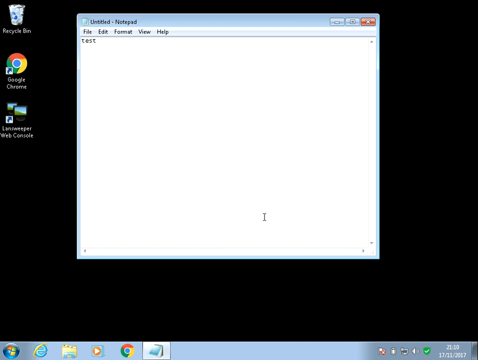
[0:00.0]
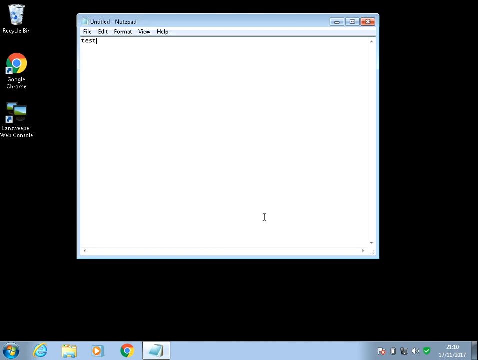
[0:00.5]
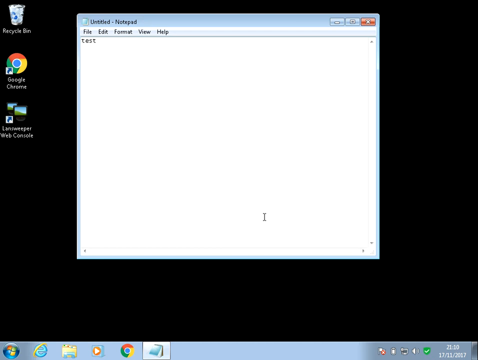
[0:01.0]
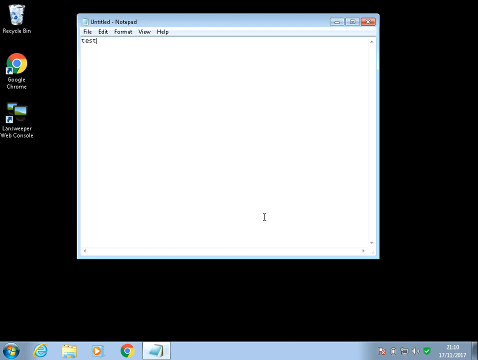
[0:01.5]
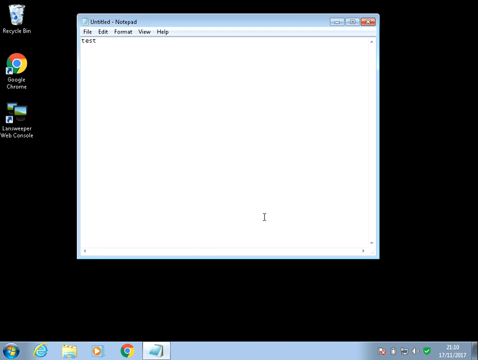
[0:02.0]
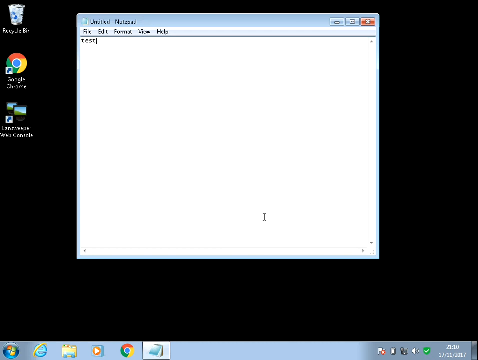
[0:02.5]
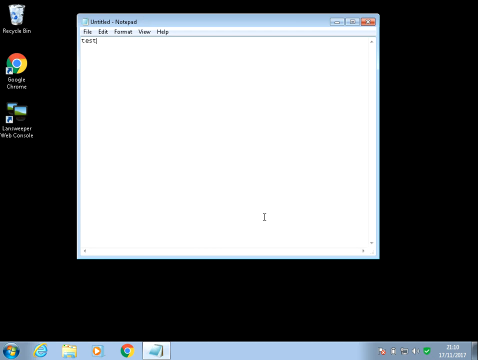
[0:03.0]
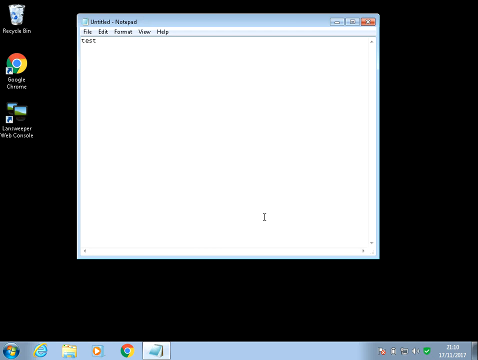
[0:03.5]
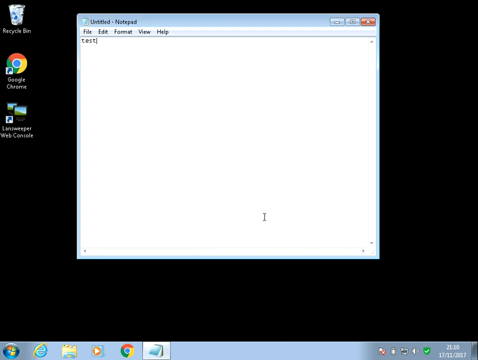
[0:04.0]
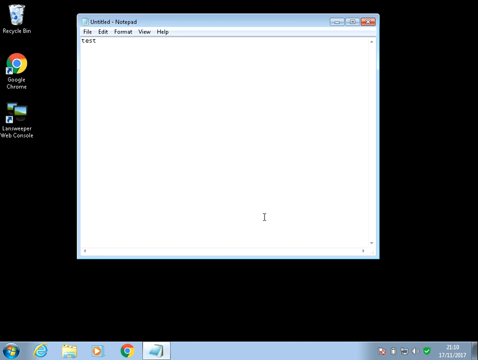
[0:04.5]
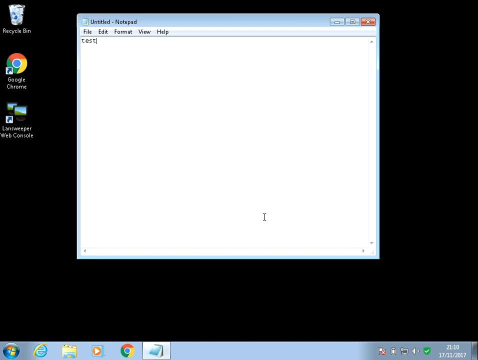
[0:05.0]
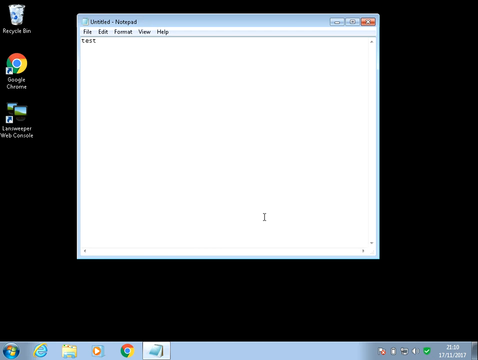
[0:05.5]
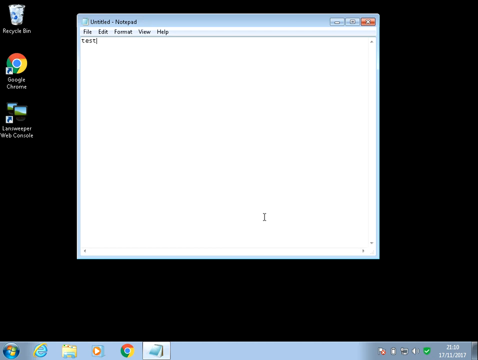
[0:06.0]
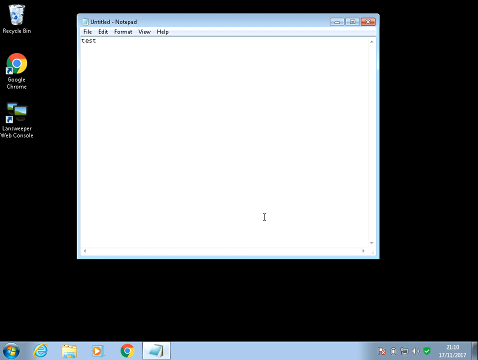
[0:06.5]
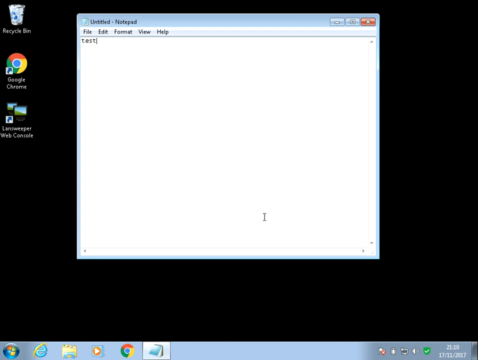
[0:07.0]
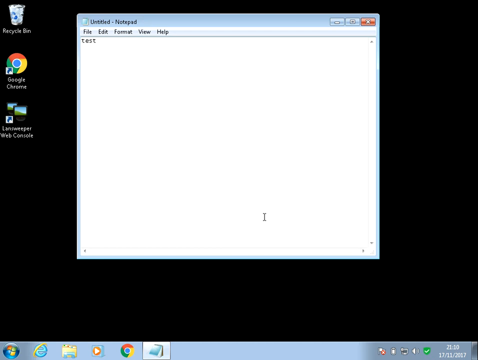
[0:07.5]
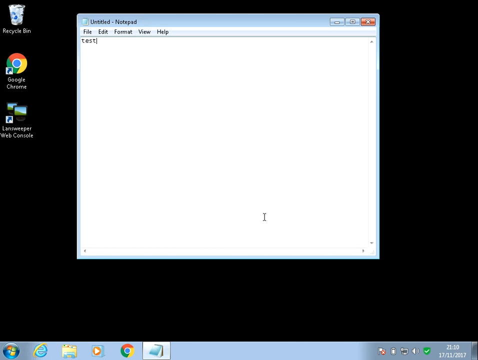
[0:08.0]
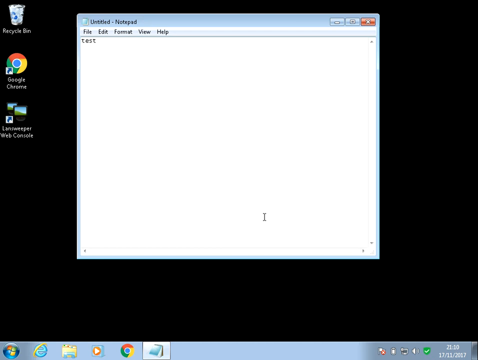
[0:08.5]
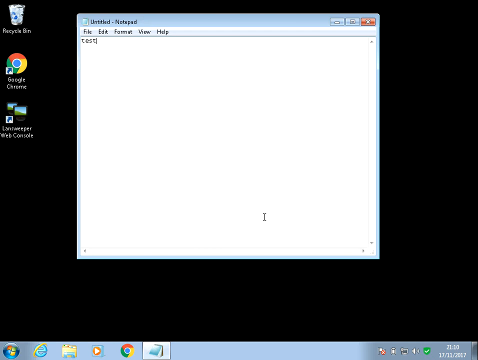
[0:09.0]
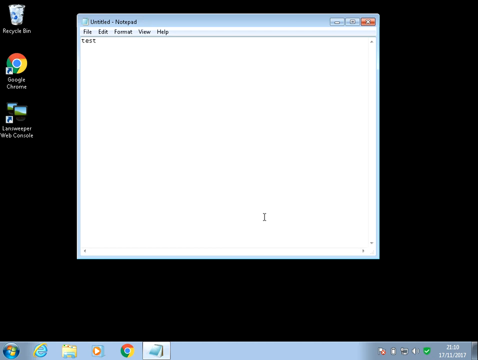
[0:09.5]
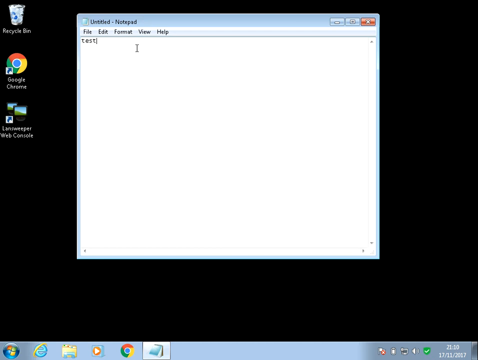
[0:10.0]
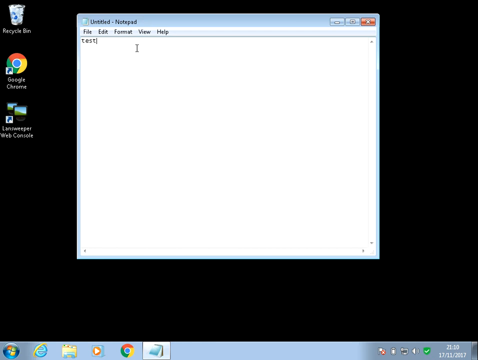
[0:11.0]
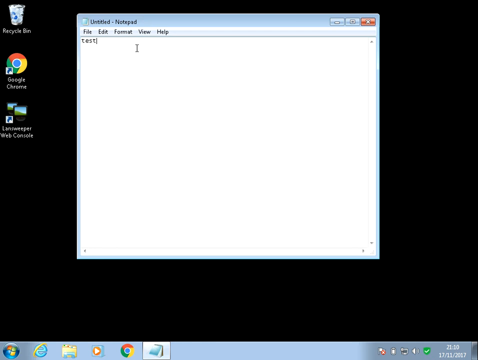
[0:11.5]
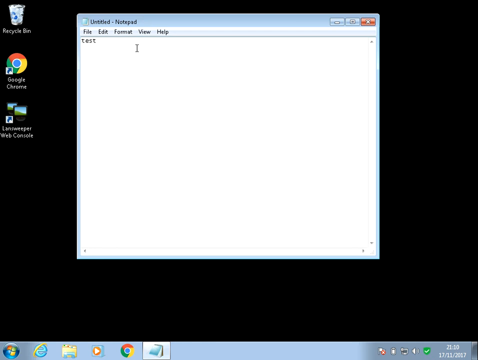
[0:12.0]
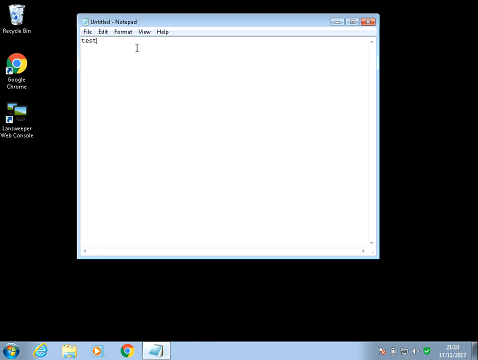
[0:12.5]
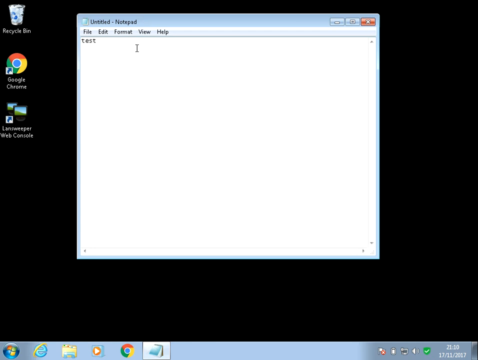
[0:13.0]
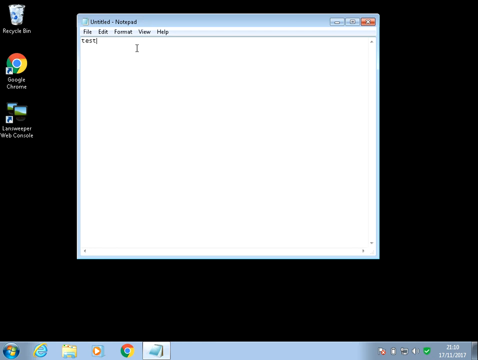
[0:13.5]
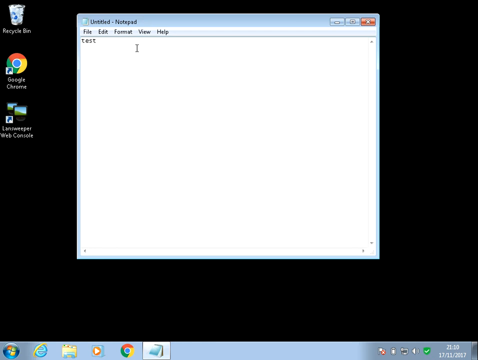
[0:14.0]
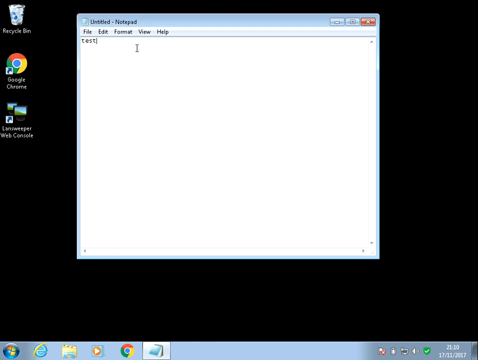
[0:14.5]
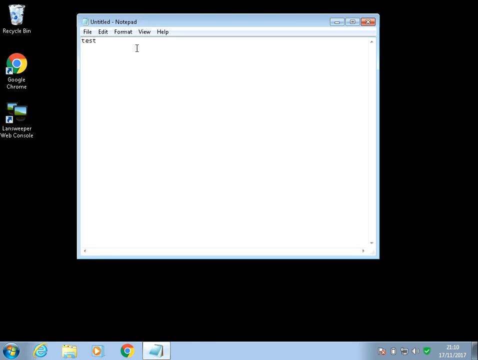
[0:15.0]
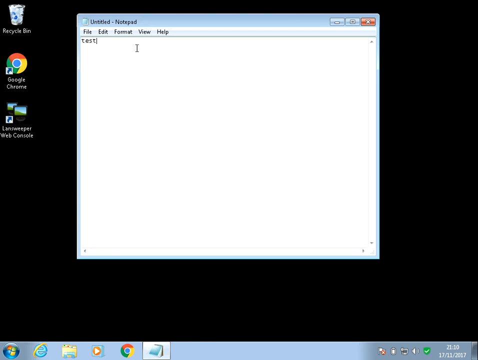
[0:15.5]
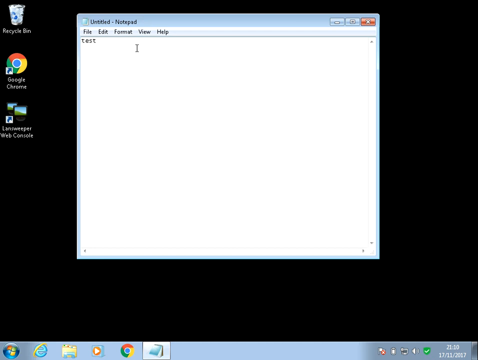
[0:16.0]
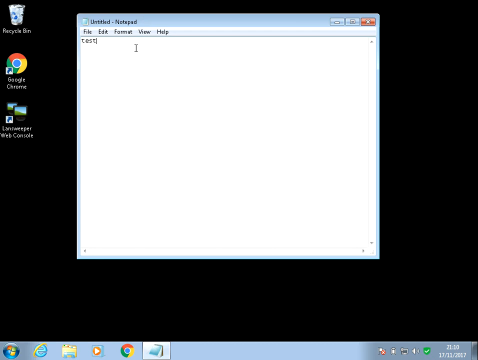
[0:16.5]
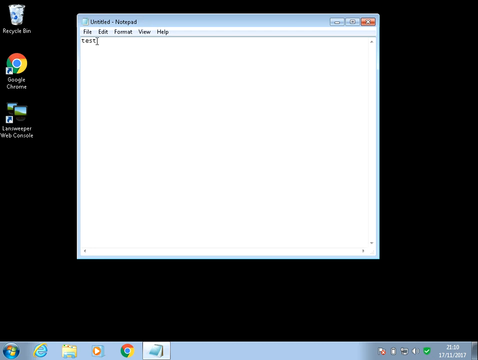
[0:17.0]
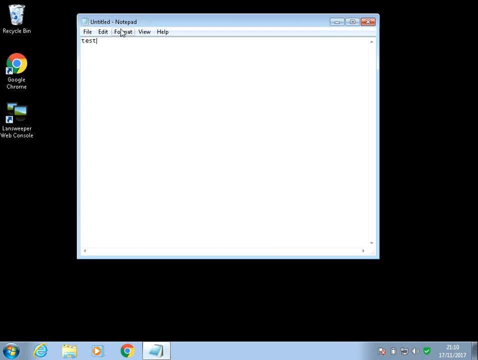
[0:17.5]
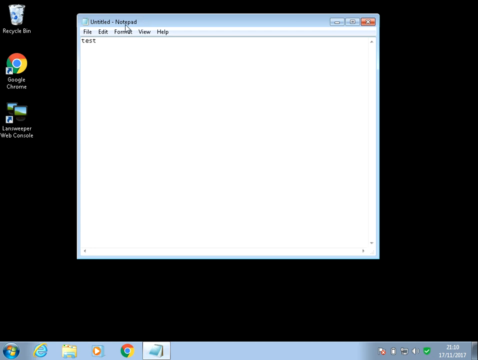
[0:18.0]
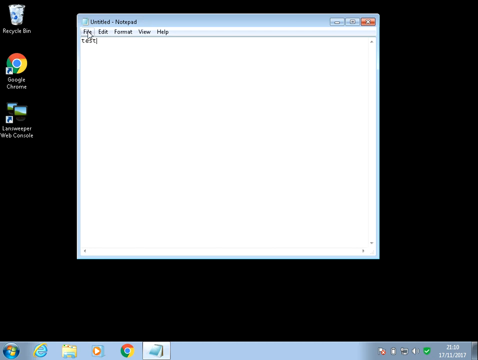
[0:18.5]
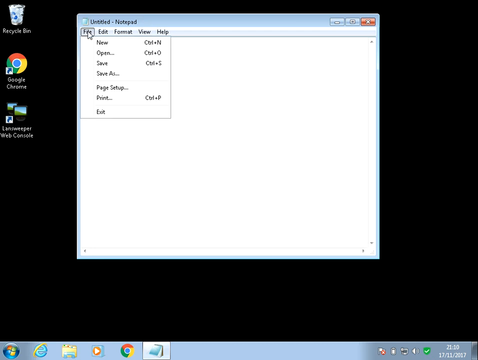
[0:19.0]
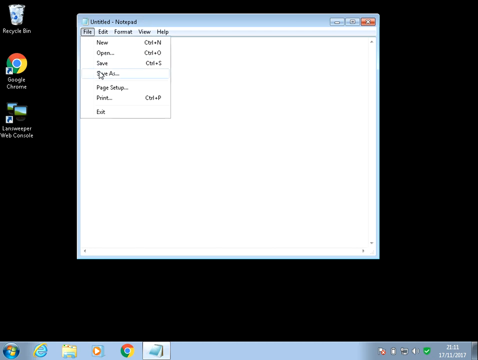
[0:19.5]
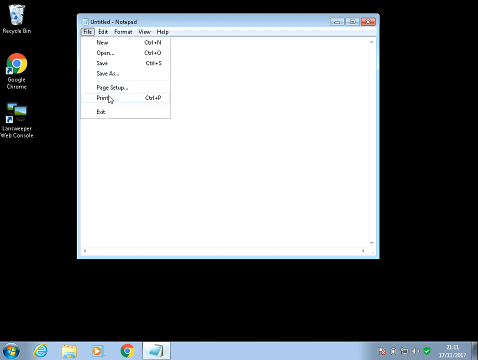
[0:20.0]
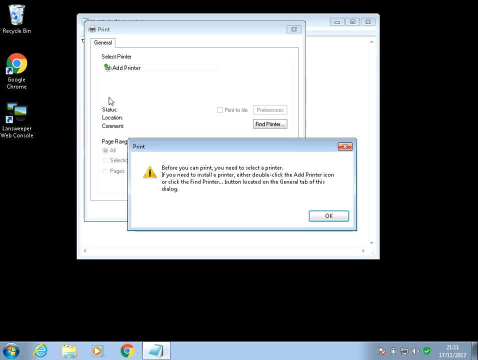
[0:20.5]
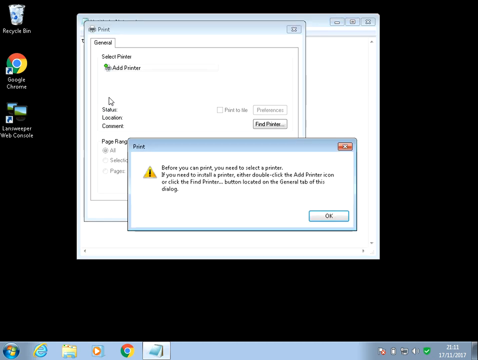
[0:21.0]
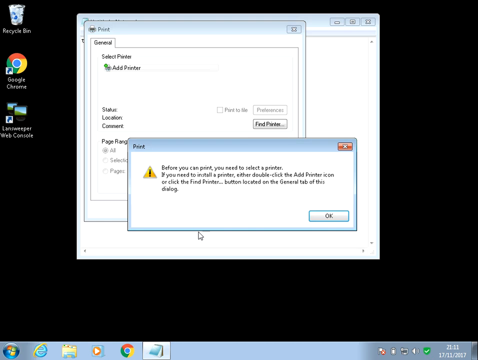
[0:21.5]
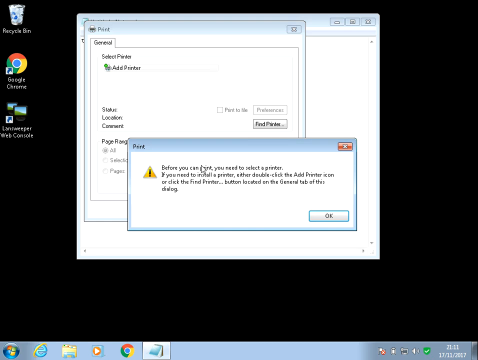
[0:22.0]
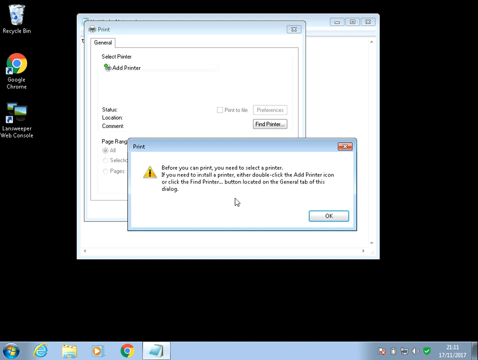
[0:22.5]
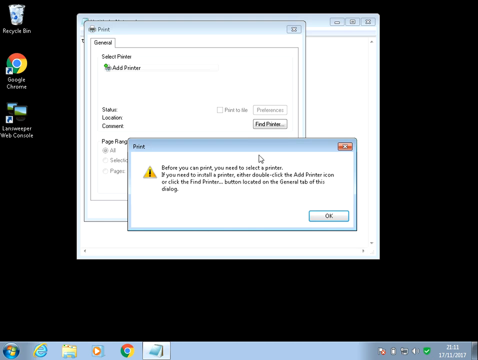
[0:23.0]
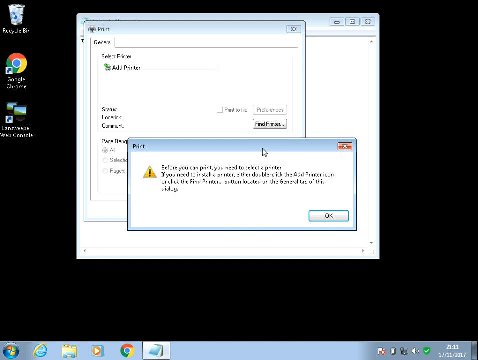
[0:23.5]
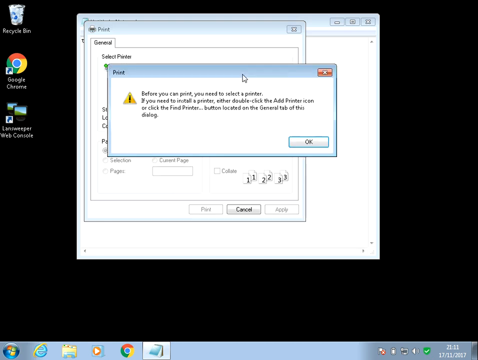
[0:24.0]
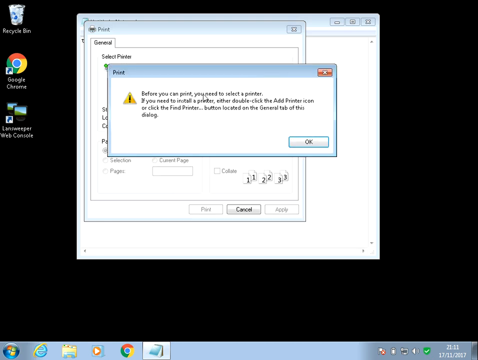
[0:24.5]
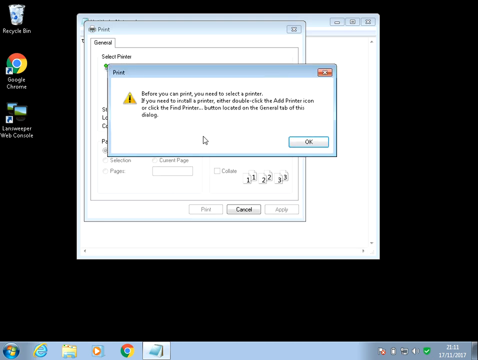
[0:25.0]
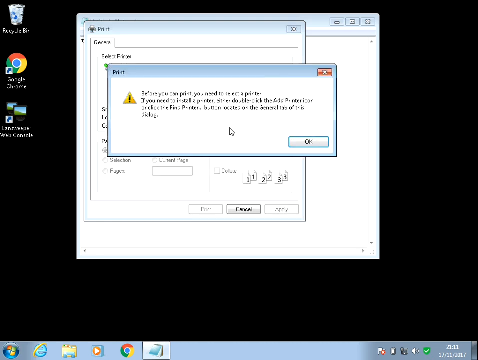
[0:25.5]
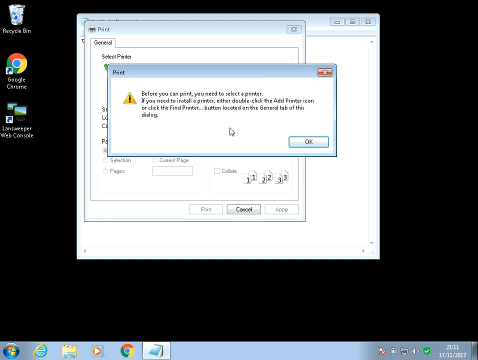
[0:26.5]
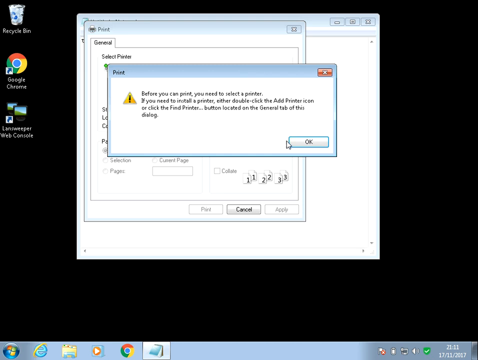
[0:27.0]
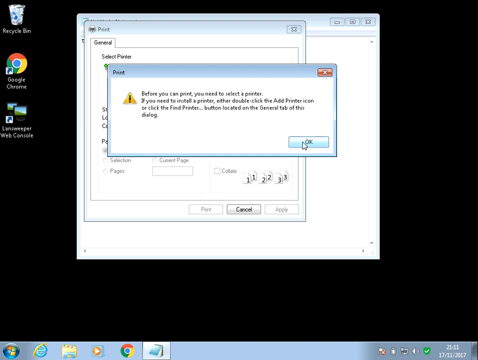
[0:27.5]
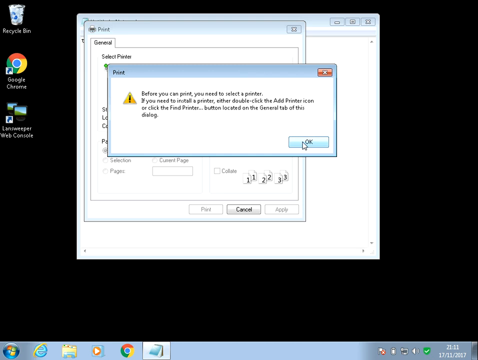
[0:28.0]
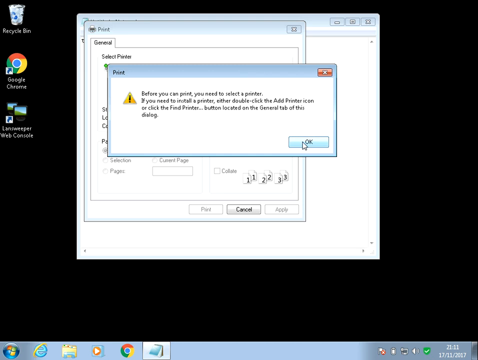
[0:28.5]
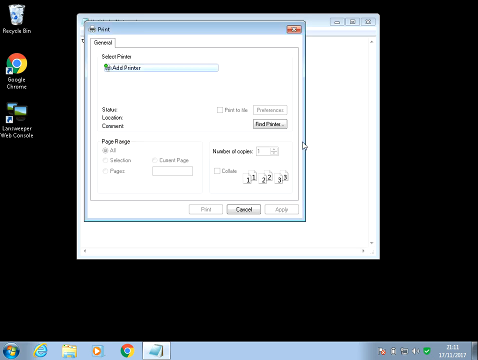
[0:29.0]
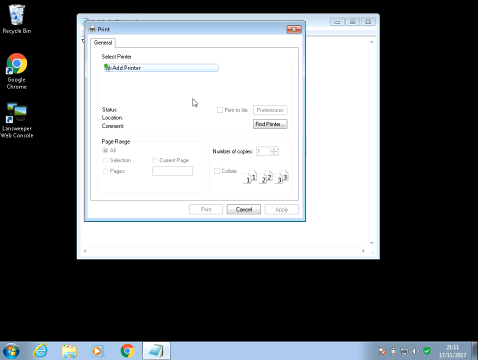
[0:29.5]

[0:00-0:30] The frame is roughly square, possibly slightly wider than it is tall. It shows someone's desktop with a black wallpaper and three icons in a column on the left-hand side: Recycle Bin, Google Chrome, and a third whose label cannot be read. Notepad is open in the very center; at the top of Notepad it says "Test", and the cursor is blinking. The user brings the cursor just to the right of "Test", then moves to the upper right of the word Notepad, comes down to the File option, clicks File, and goes to Print. A pop-up alert appears at the bottom of the Notepad area with "Print" at the top left and a caution symbol, a yellow triangle with a black exclamation point. It says "Before you can print, you need to select a printer. If you need to install a printer, either double-click the Add Printer icon or click the Find Printer button located on the General tab of this dialog." The user then goes to the top and moves the window up a little.